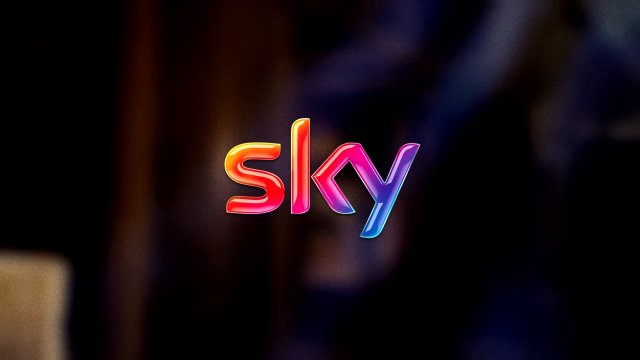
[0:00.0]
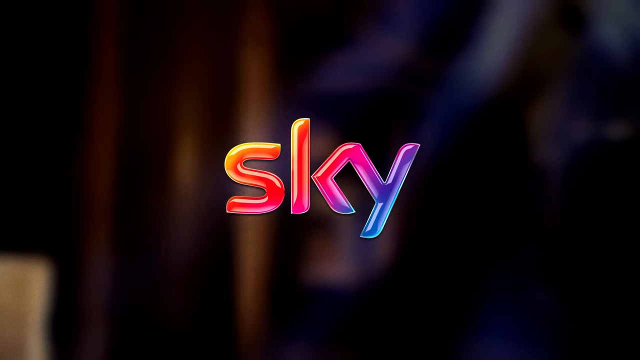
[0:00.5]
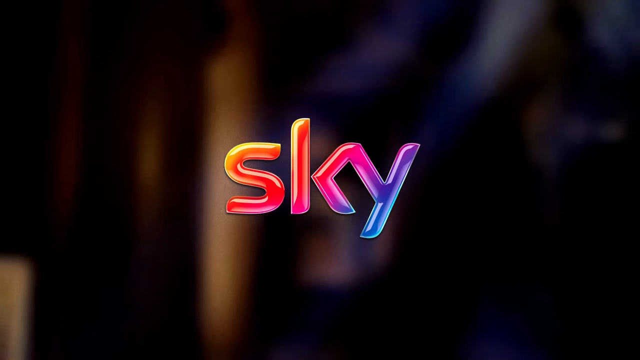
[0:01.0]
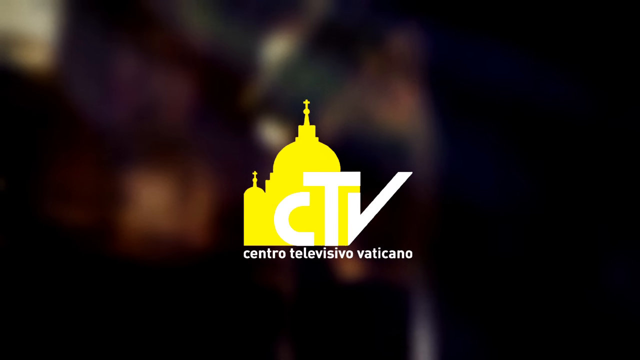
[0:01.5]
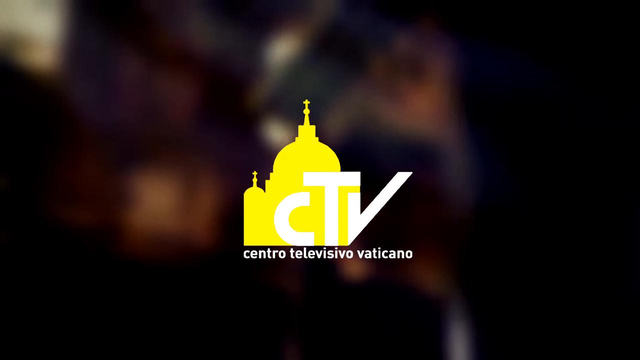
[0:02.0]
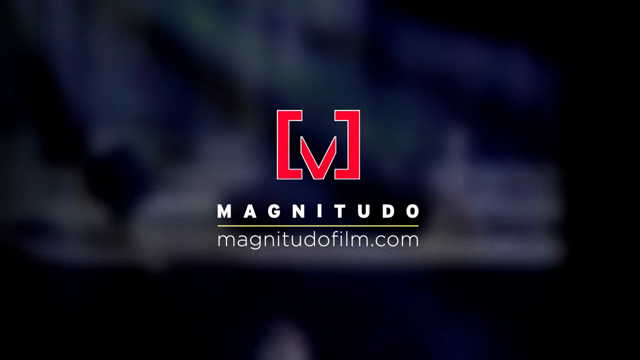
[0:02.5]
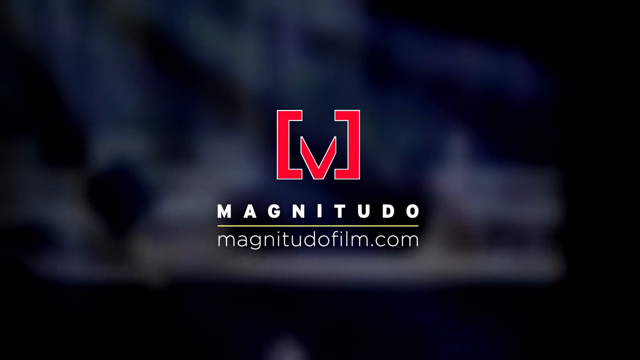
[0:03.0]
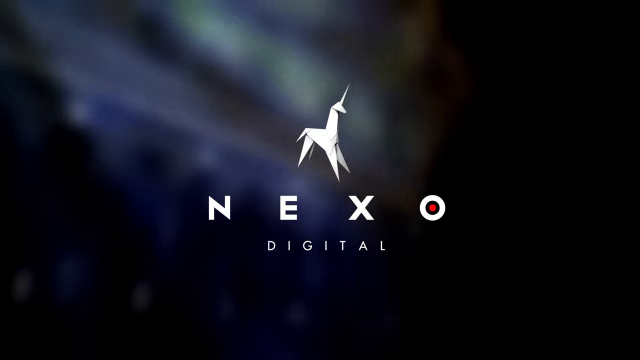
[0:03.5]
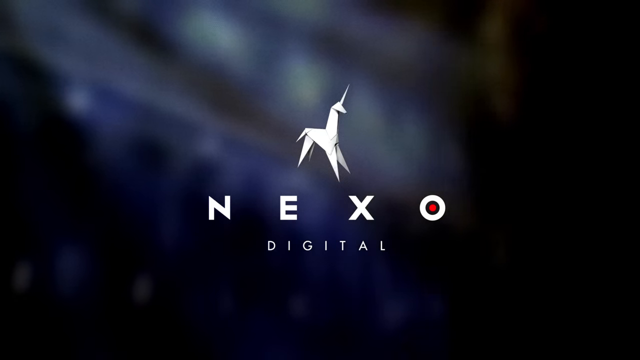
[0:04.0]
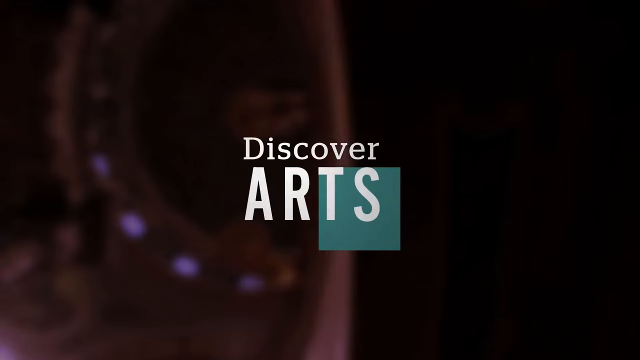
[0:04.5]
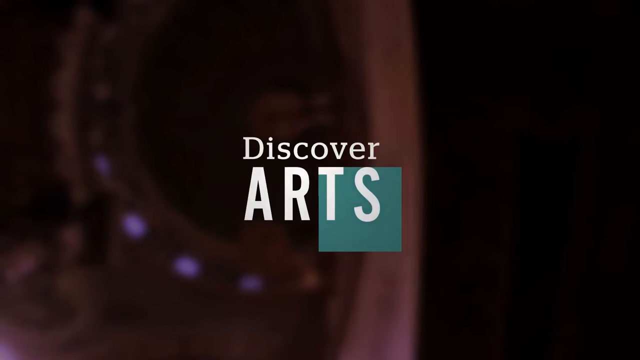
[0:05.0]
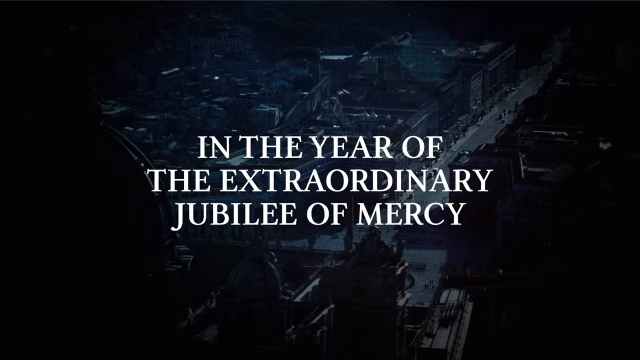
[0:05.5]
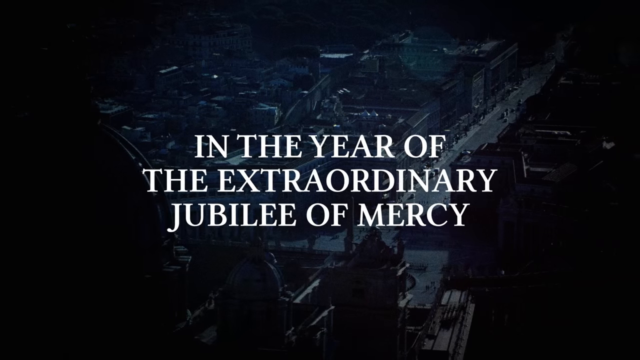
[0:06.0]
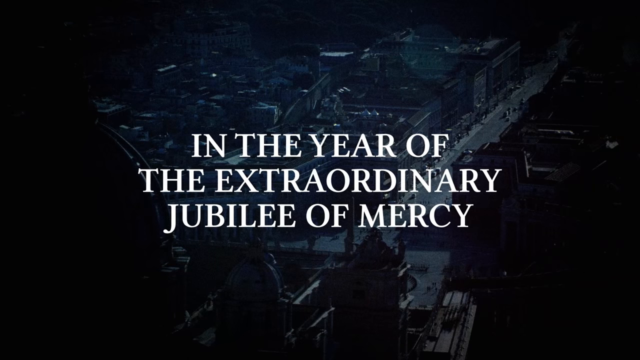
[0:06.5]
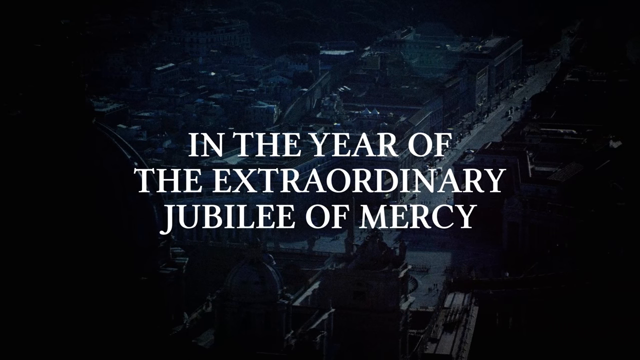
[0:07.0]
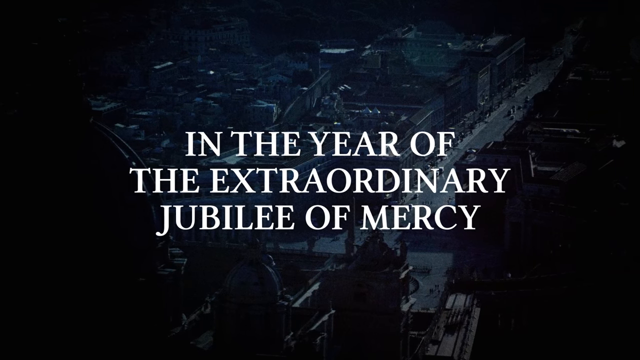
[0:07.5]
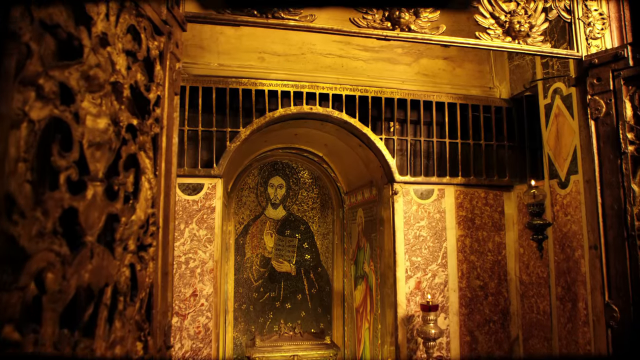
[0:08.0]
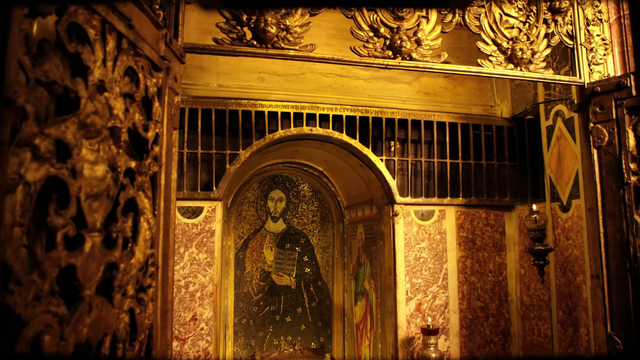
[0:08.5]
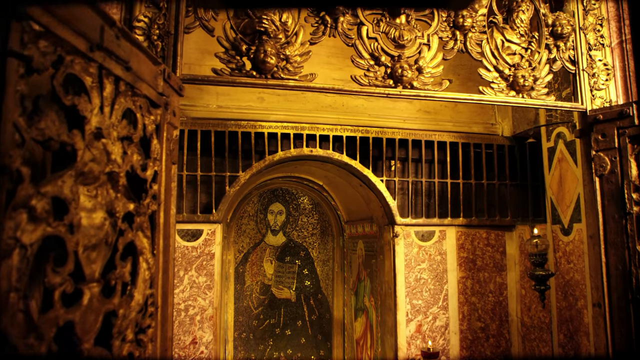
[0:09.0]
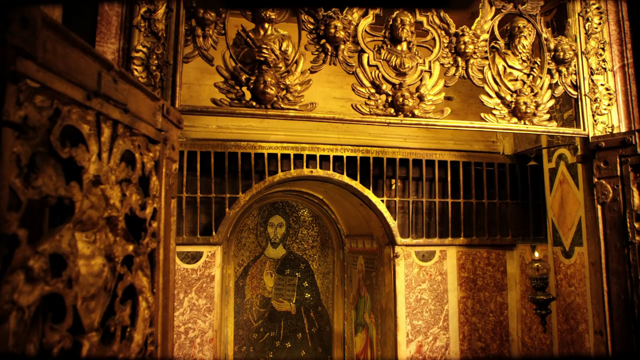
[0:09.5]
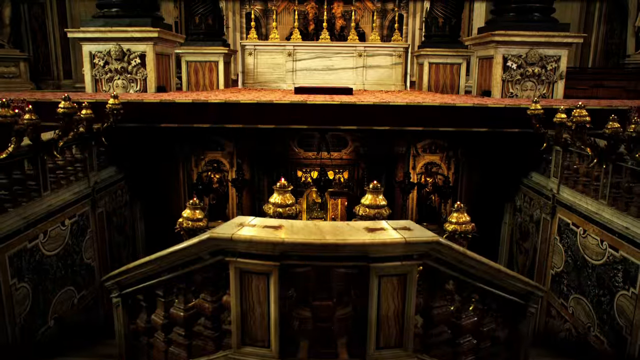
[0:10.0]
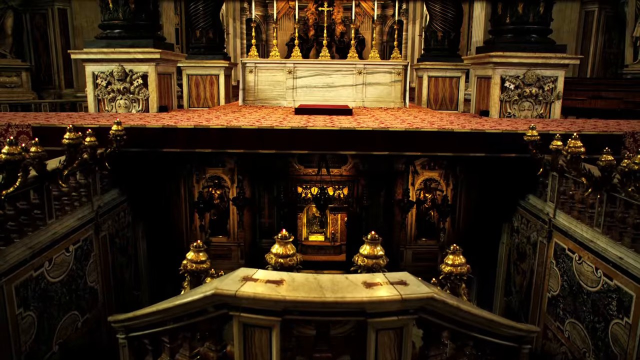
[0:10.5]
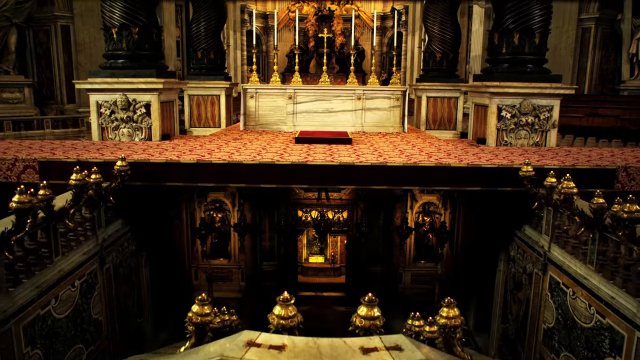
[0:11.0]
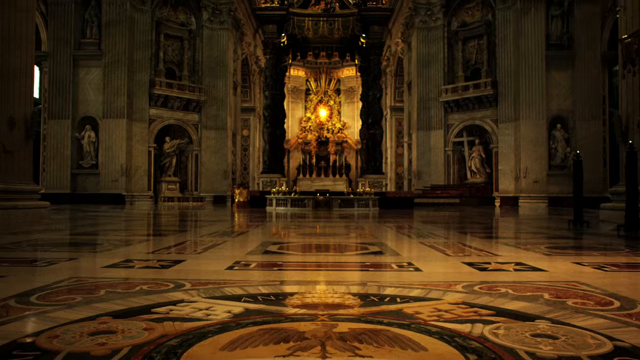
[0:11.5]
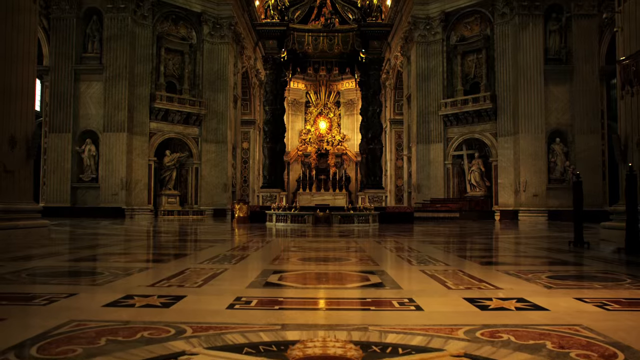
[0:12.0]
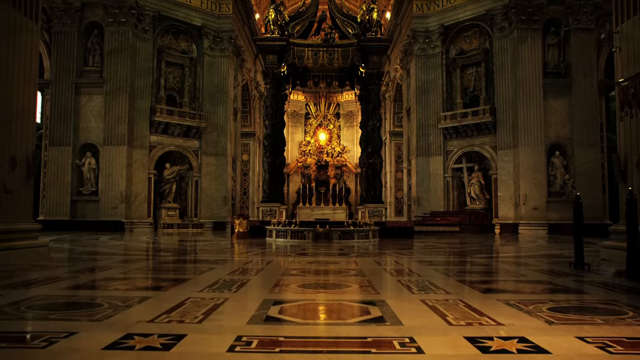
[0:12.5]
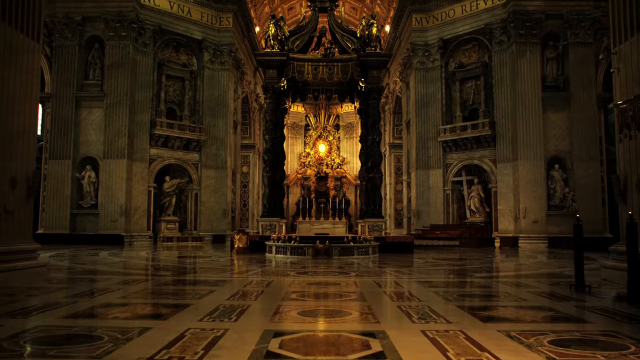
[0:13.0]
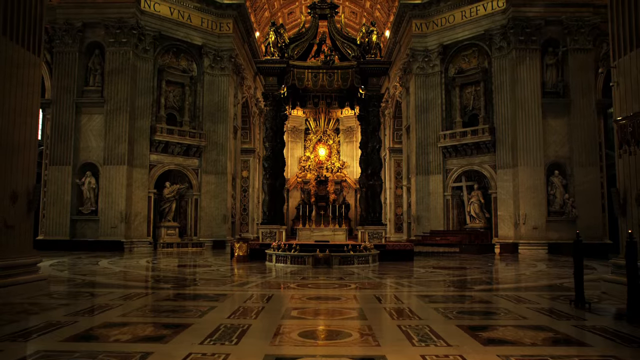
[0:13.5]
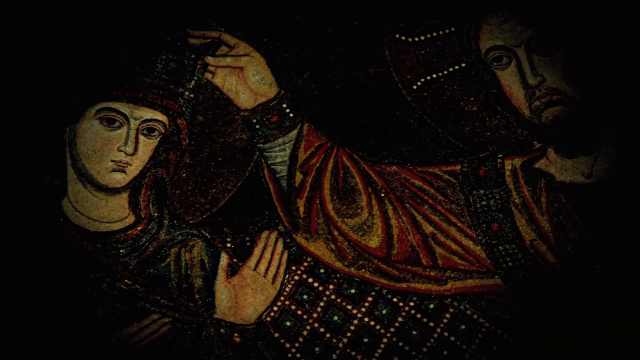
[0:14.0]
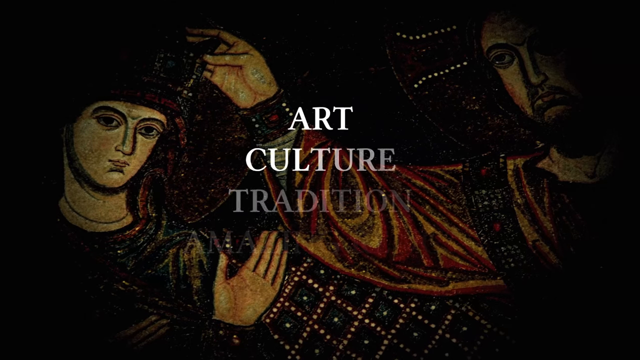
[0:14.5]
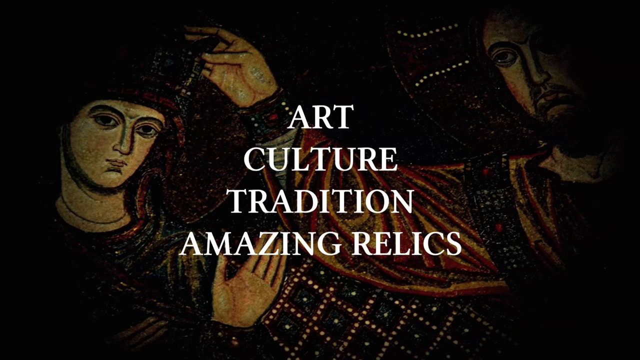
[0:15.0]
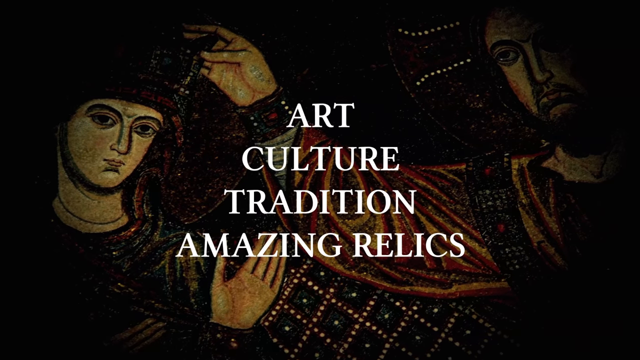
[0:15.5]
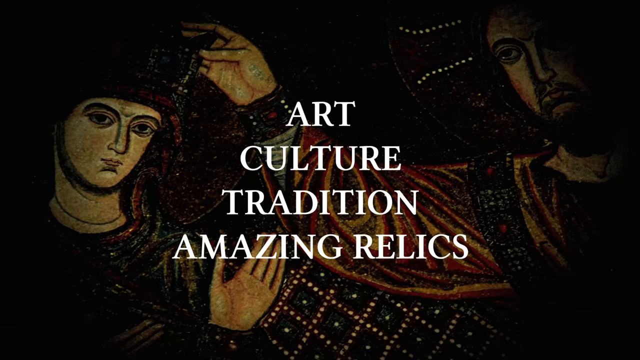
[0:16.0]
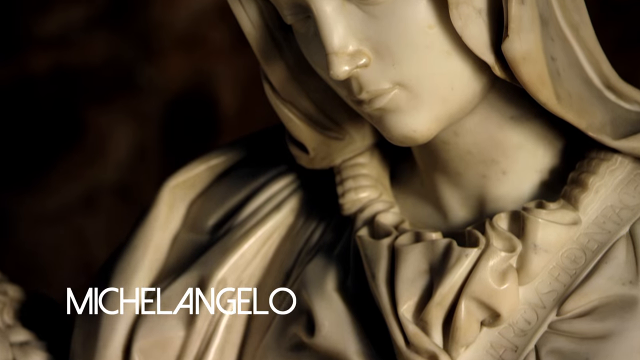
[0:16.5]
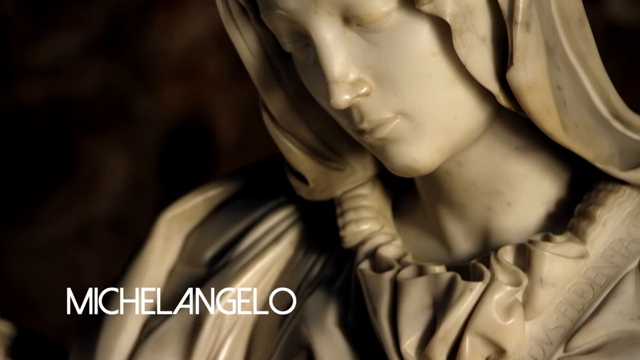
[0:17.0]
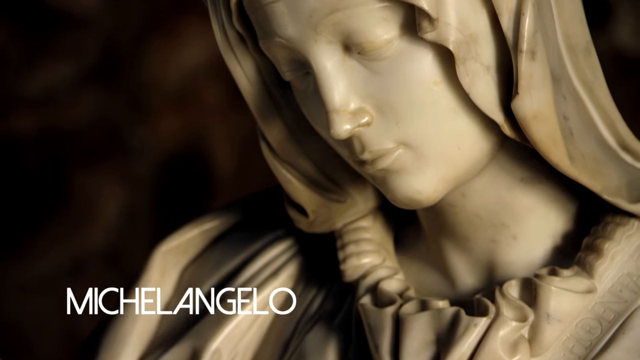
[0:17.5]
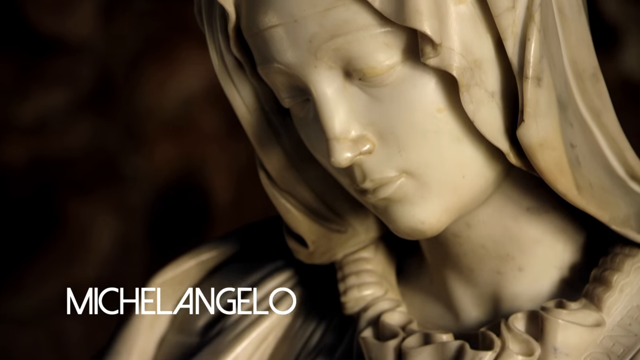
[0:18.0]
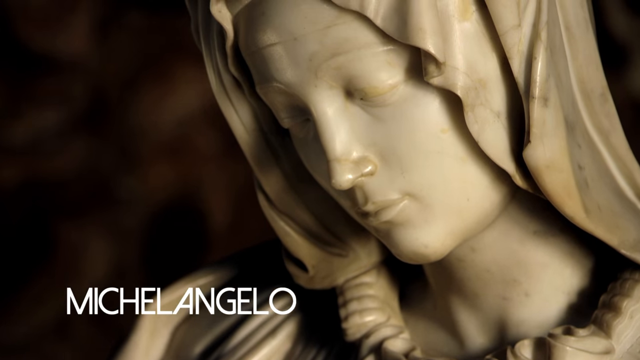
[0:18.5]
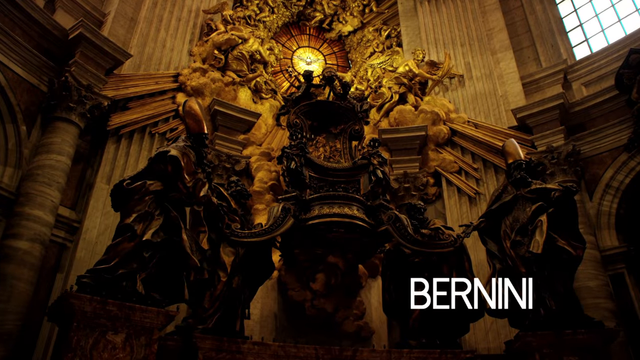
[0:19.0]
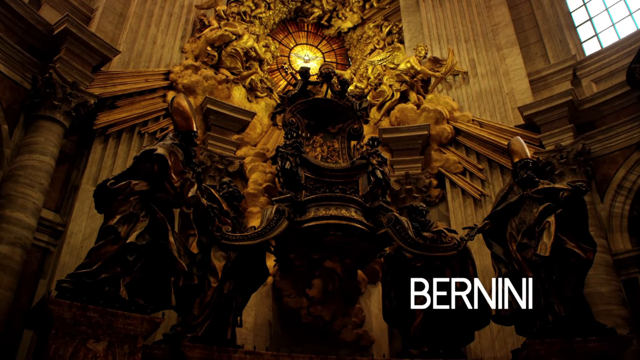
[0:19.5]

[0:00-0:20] The video is a collaboration from Sky, Centro Televiso Vaticano, Magnitudo film and Nexo Digital, as well as Discovery Arts, and the film is about religious buildings and artwork. Text reads "In the year of the extraordinary Jubilee of Mercy." The camera pans to church artwork, a religious mosaic on a wall that looks like it is in a church from Byzantine times. It then pans upward, showing a different church, maybe built during the Middle Ages, and then through to the Renaissance. This interior of a different church has statues carved into the walls and a very elaborate altar with a canopy. The video goes back to mosaic art of two religious figures, with text in the middle that says "Art, culture, tradition, amazing relics." Michelangelo follows, with a picture of a pietà made by Michelangelo, as well as a sculpture from Bernini.